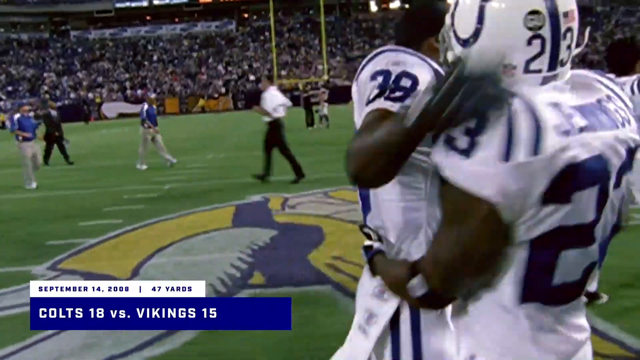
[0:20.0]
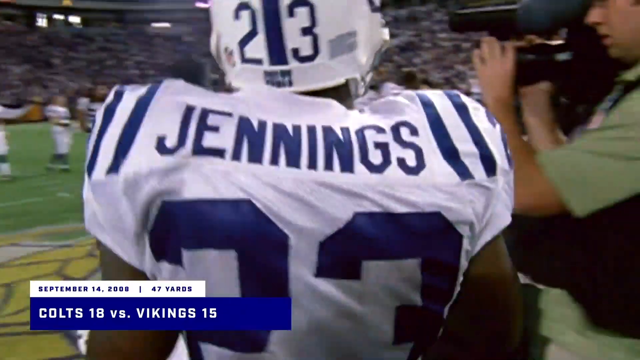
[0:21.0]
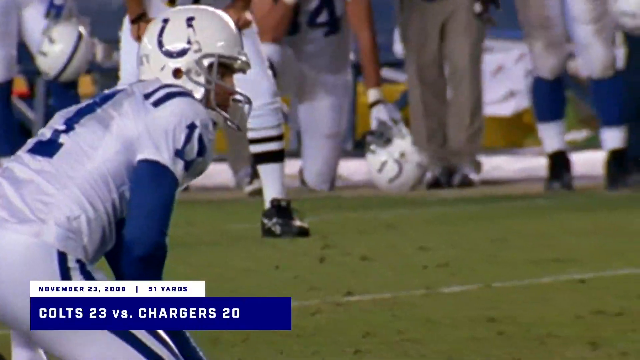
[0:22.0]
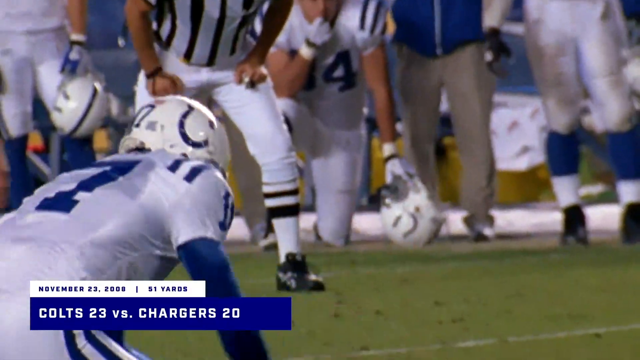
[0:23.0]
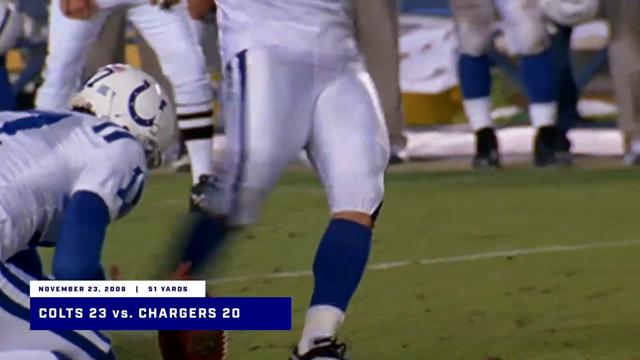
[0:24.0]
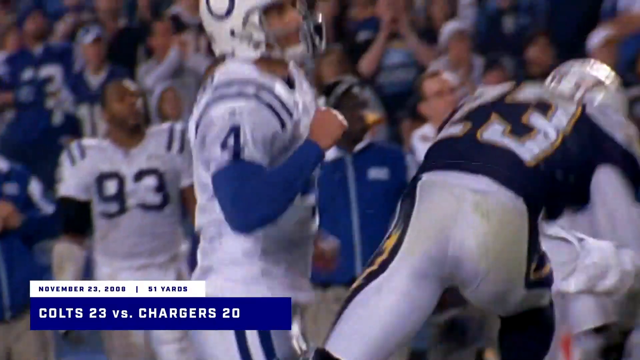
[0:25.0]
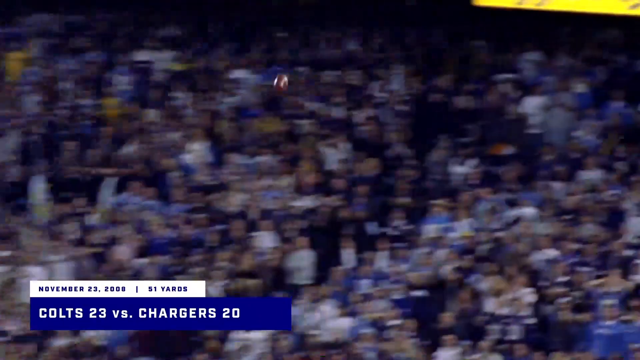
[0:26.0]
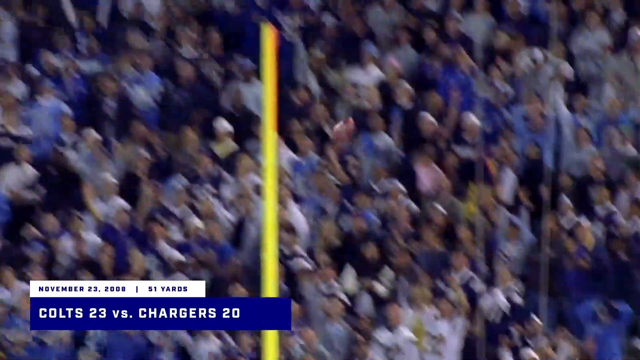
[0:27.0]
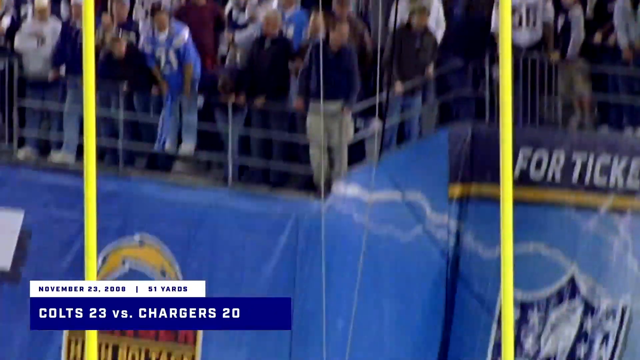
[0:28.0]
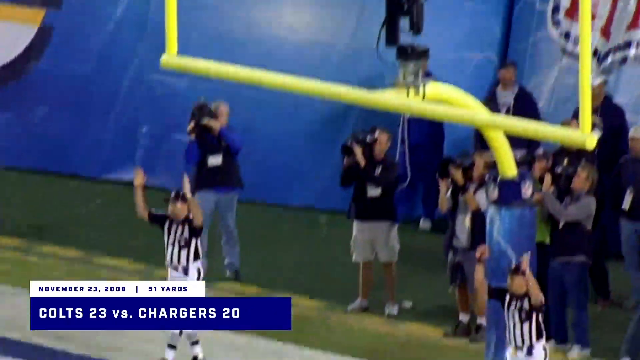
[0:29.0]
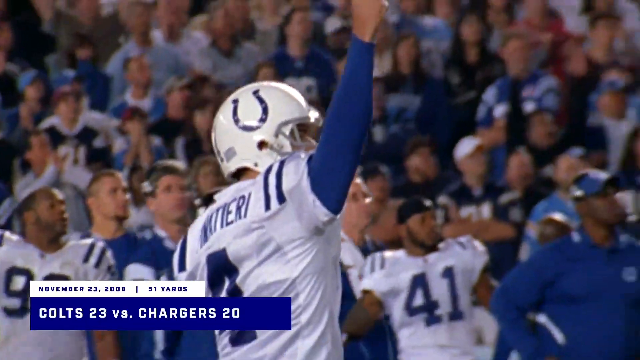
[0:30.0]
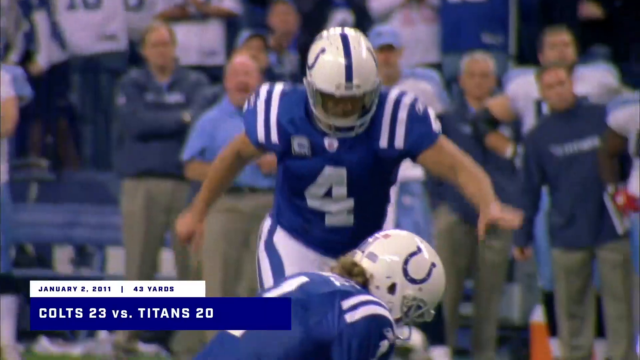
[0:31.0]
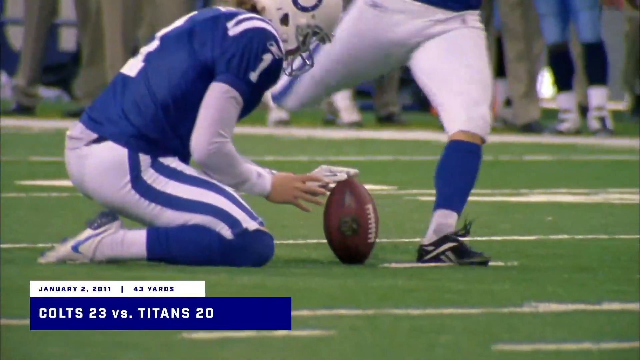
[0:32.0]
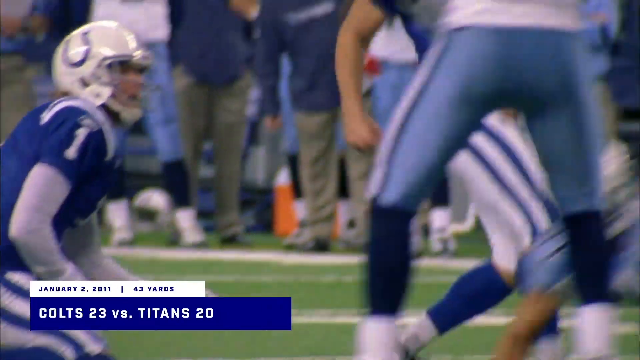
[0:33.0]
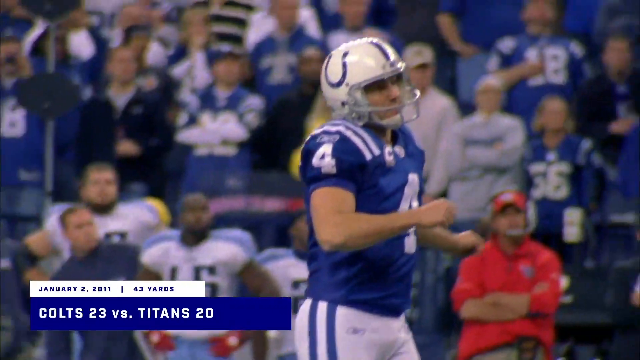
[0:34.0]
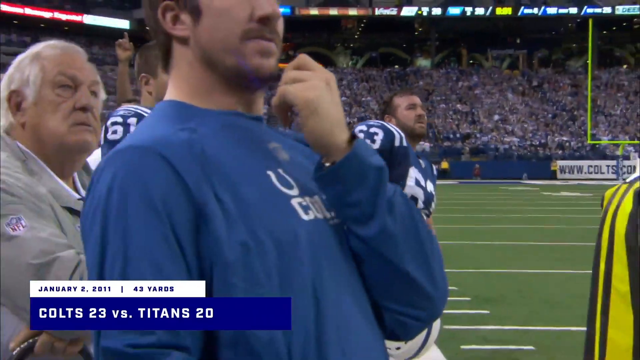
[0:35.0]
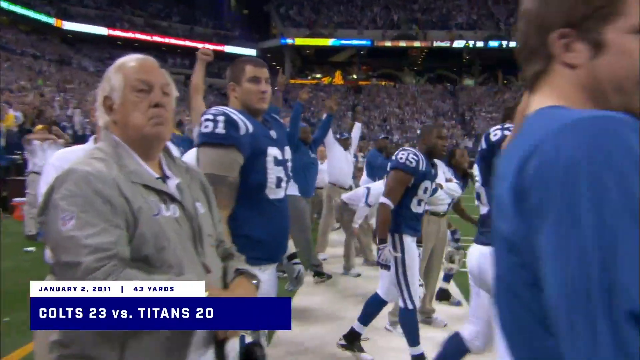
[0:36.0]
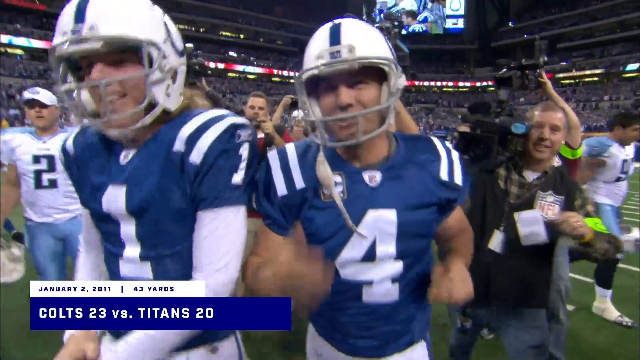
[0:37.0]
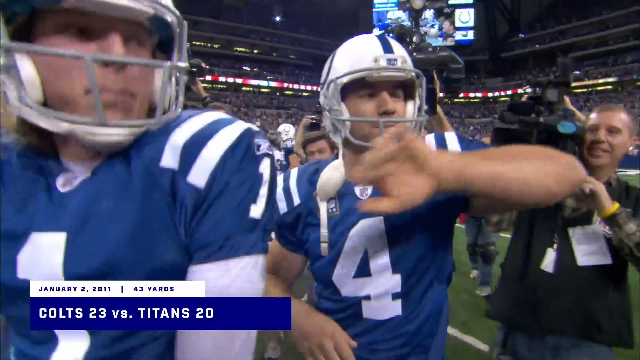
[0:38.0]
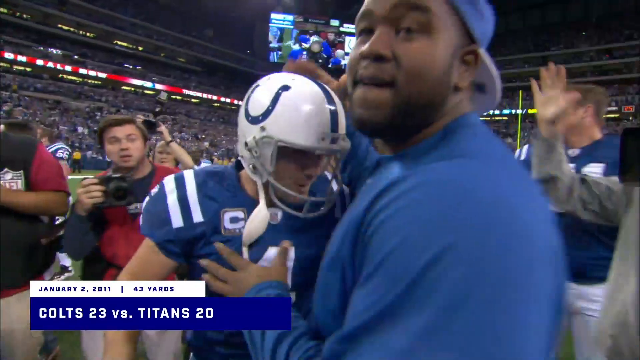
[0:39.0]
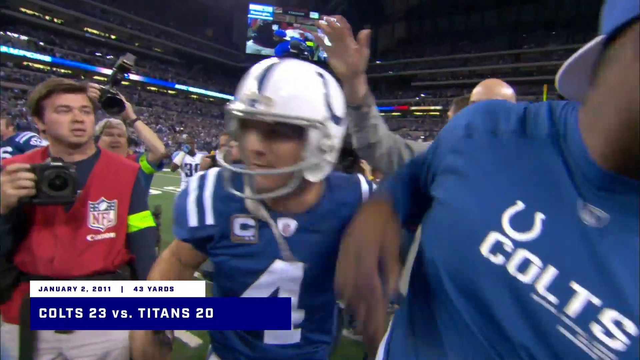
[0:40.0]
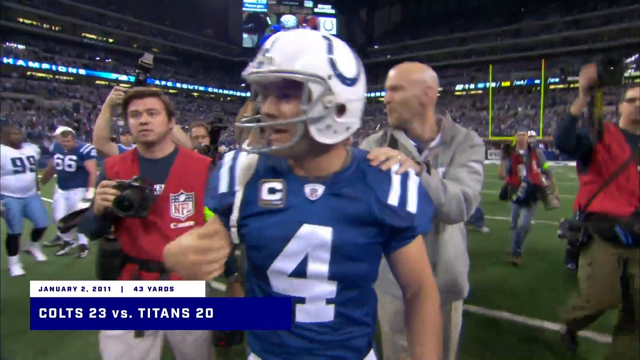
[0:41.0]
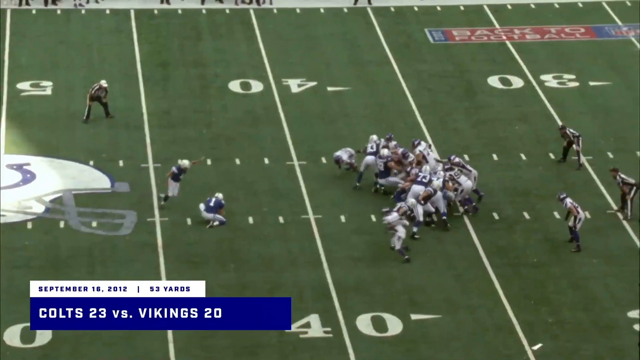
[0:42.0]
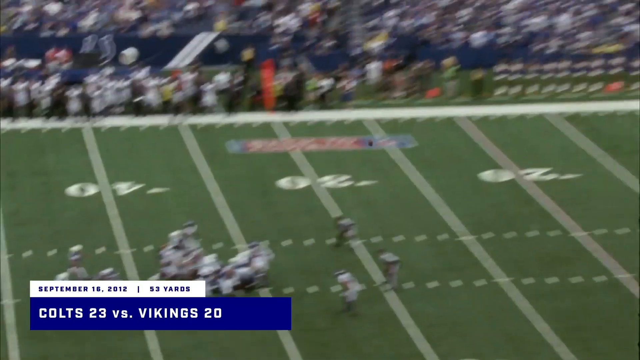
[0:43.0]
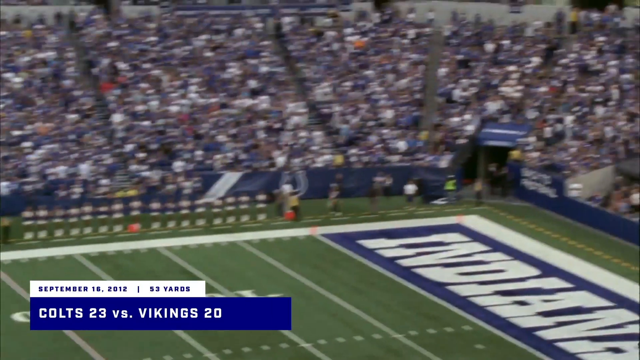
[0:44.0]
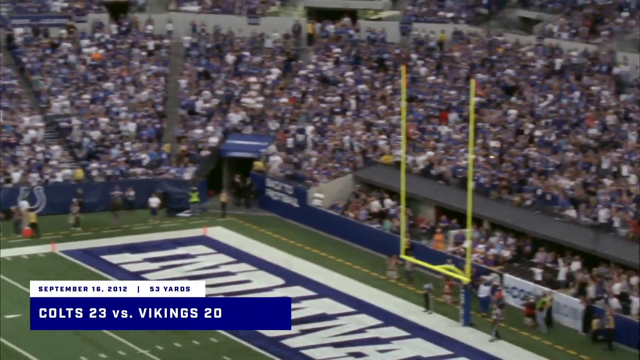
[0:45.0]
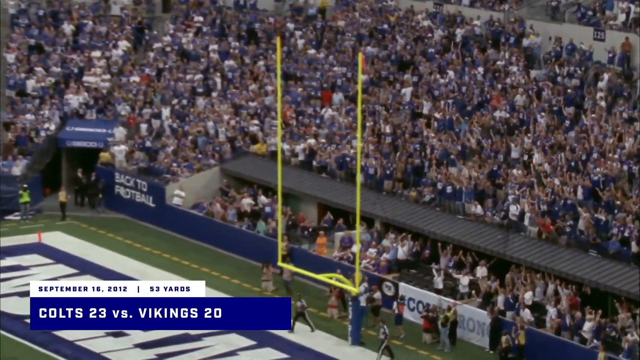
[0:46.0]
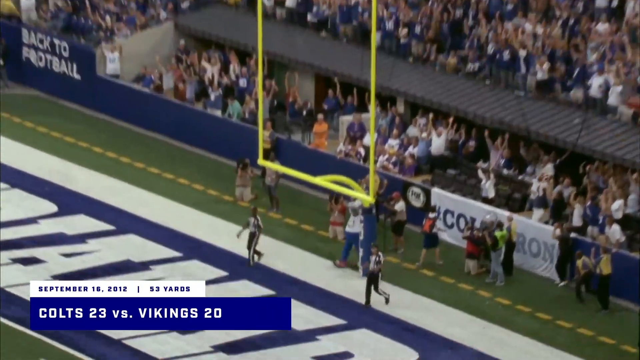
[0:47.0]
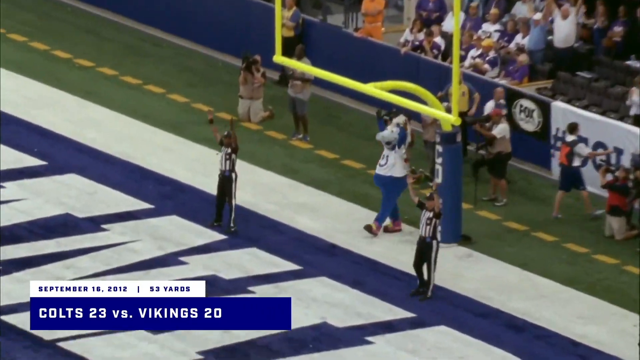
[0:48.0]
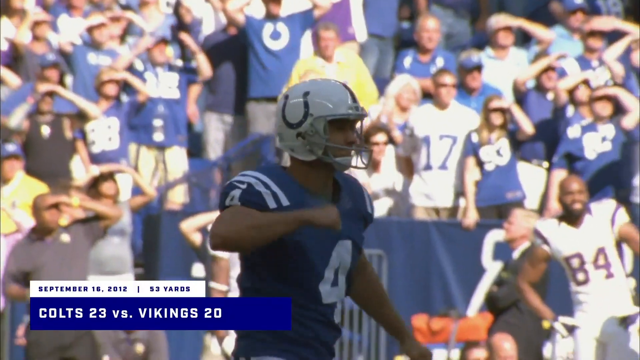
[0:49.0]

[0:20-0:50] A couple of players celebrate; one has the name "Jennings" on the back of his jersey. The Colts players wear white jerseys with blue lettering, and their helmets have a blue horseshoe on them. A different angle then shows the player receiving the football and the kicker kicking the 37-yard field goal. The bottom of the screen reads "Colts 23 versus Vikings 20," suggesting the kick apparently won the game.